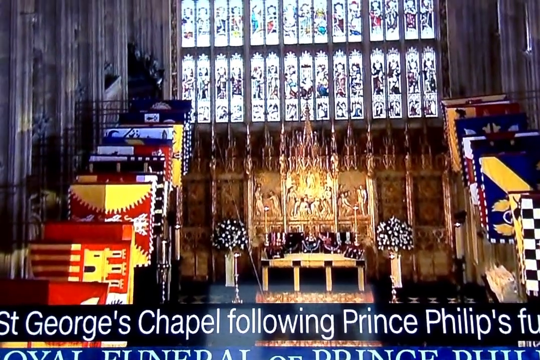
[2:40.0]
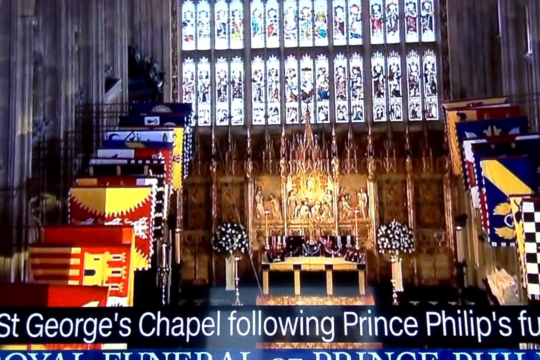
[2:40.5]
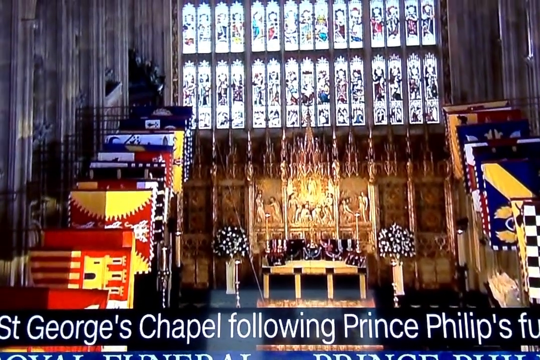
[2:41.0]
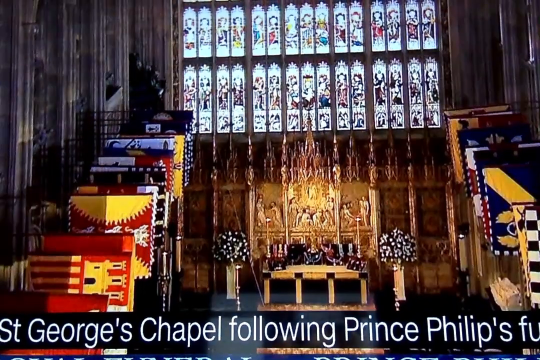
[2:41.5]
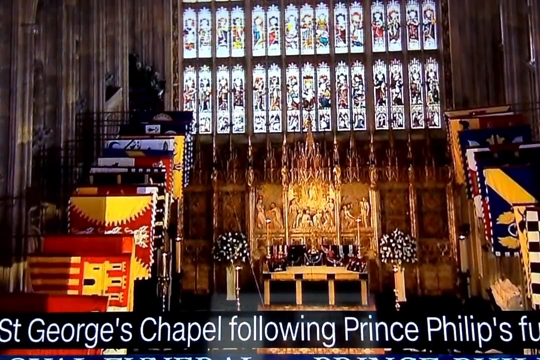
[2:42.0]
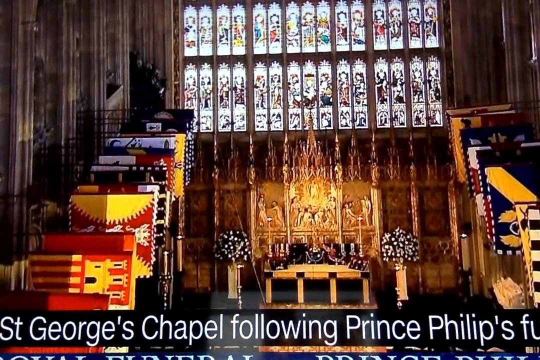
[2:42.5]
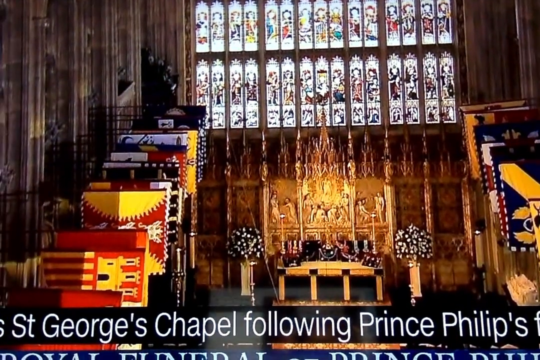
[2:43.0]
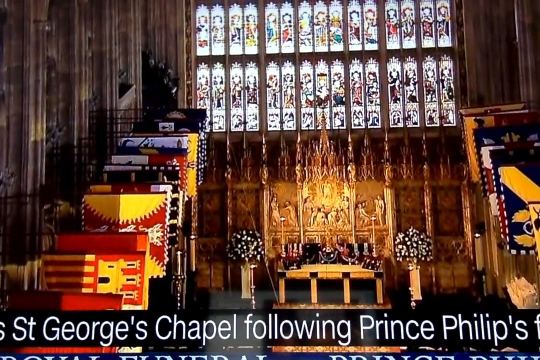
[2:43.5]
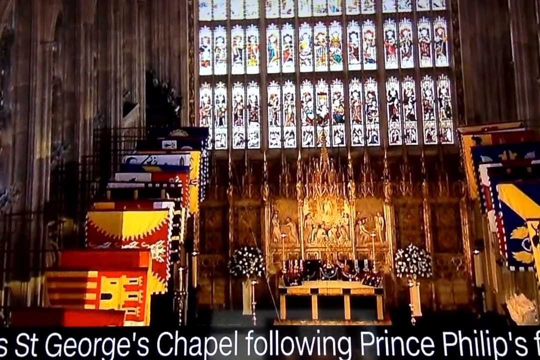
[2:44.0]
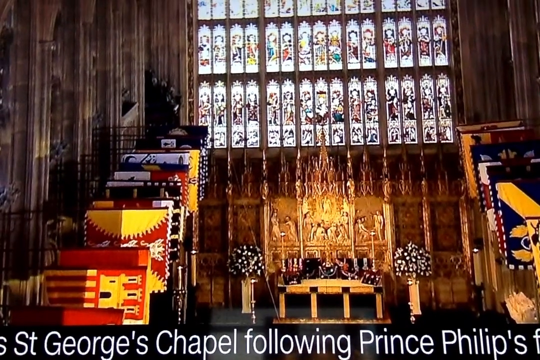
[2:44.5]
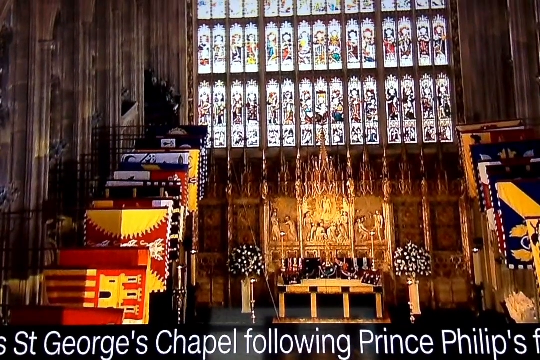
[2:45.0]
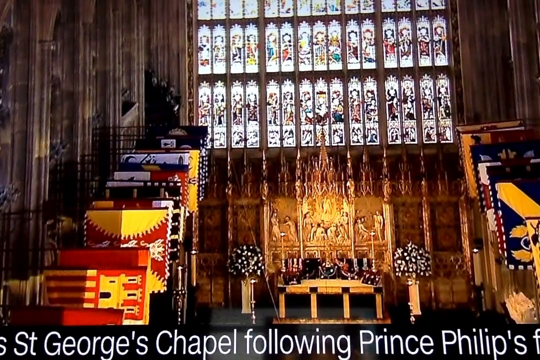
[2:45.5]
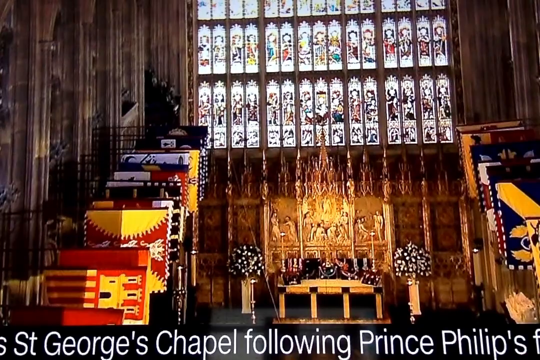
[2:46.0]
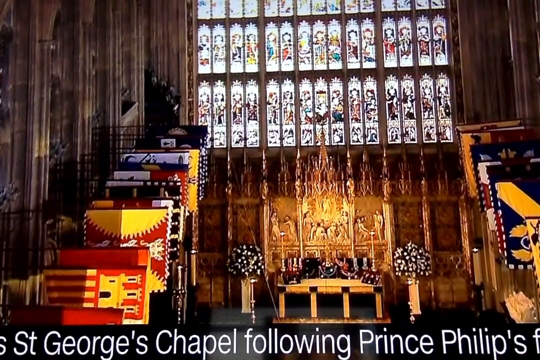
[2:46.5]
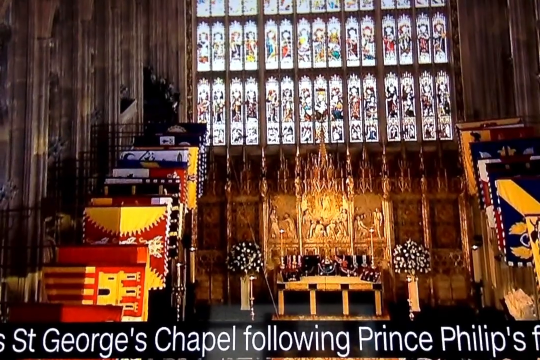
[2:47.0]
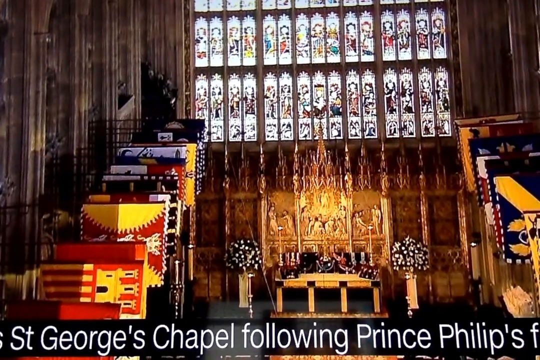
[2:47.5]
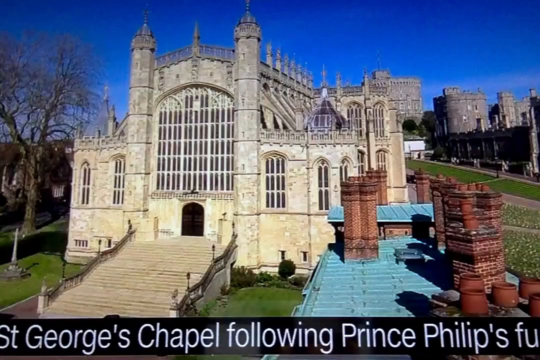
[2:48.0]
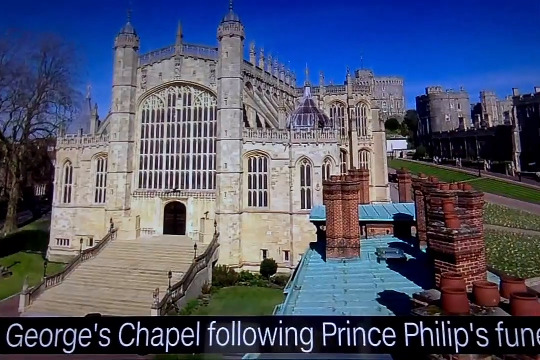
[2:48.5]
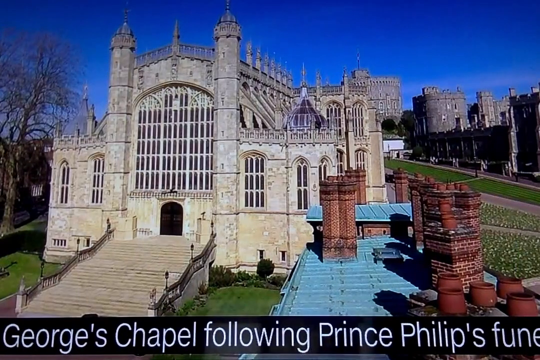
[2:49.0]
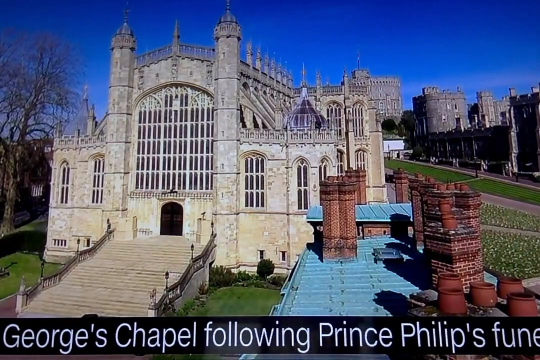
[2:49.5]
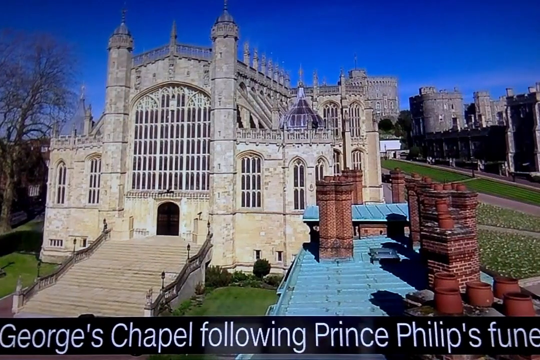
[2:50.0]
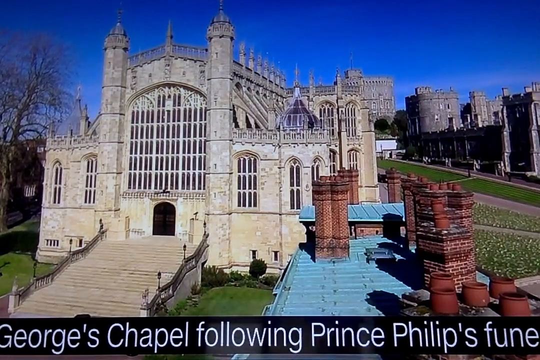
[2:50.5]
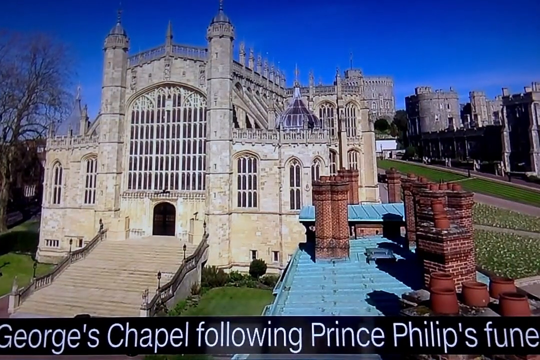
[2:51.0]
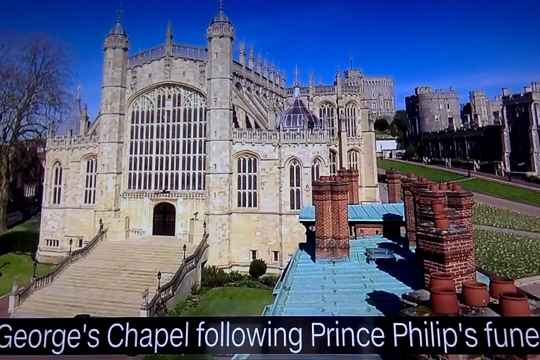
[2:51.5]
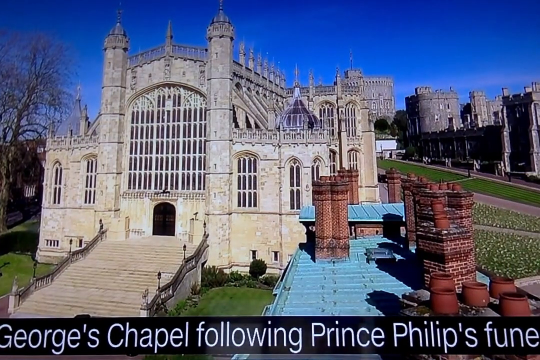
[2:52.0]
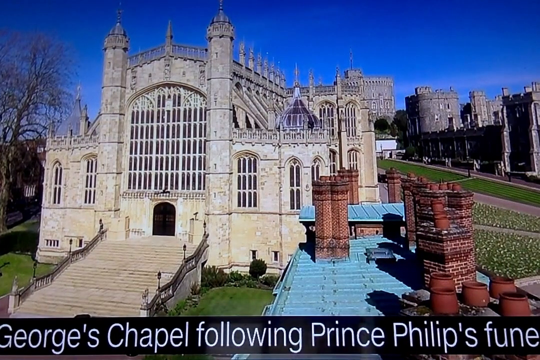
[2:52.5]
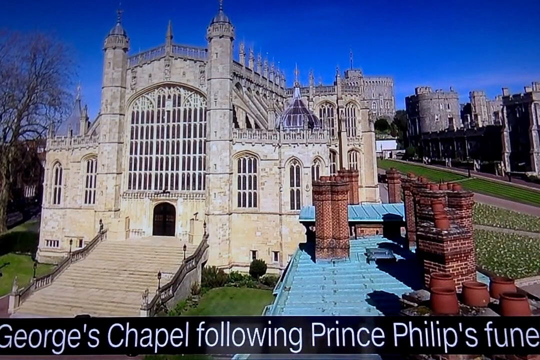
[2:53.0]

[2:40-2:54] The inside of St. George's Chapel is shown, with the front of the church and a bunch of flags in different colors on each side, including yellow and red, and blue and yellow. The front of the church is decorated with a whole bunch of windows at the top that look like saints in different colors, and beneath them is something that looks like the Last Supper. The video then cuts to the outside of the building, which is made of stone of a white-grayish color. Towards the right are a whole bunch of what look like chimneys made of bricks with adobe colors, sticking out of a blue roof, and in the back are a whole bunch of castles made of stone.